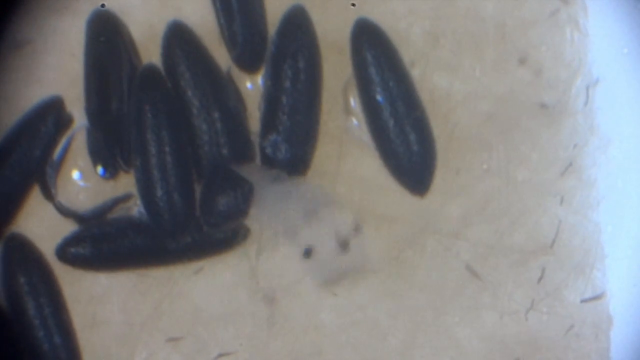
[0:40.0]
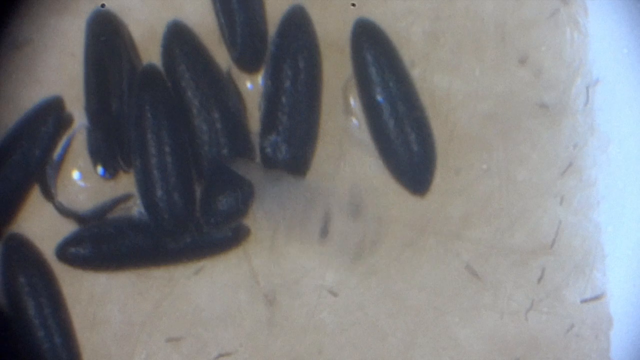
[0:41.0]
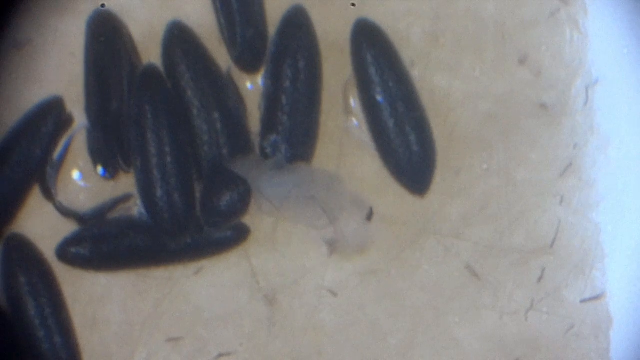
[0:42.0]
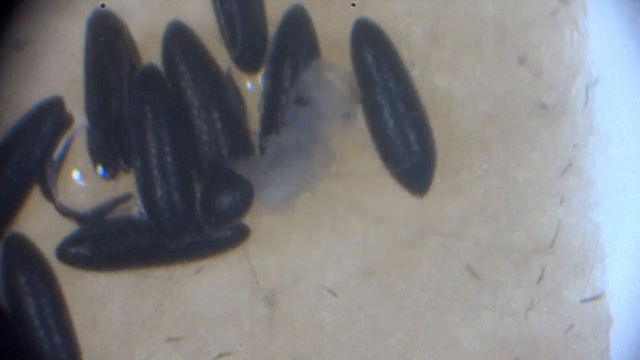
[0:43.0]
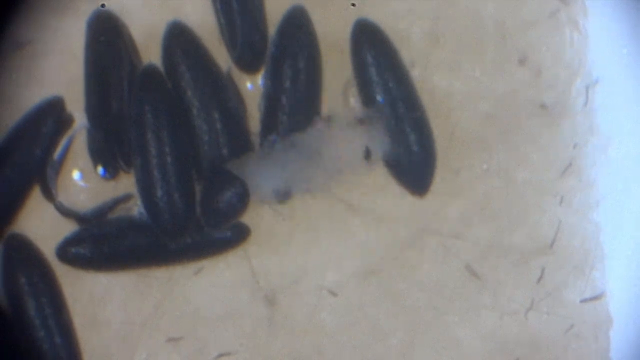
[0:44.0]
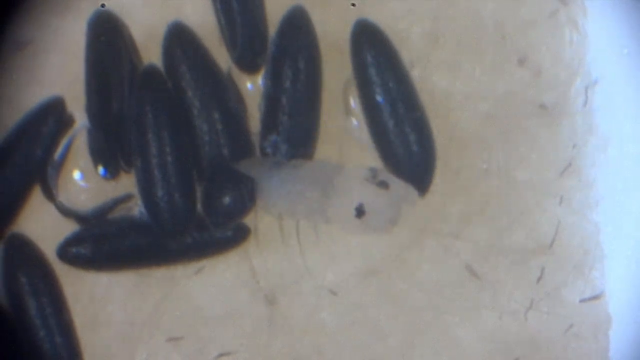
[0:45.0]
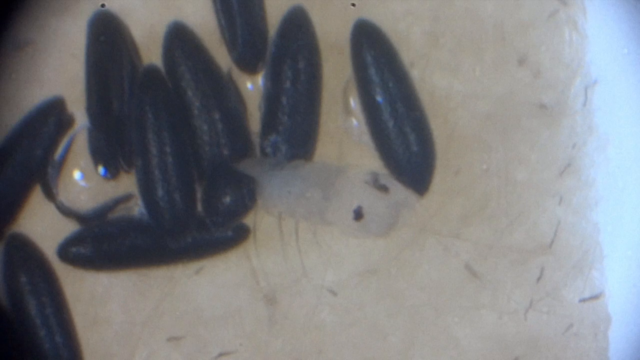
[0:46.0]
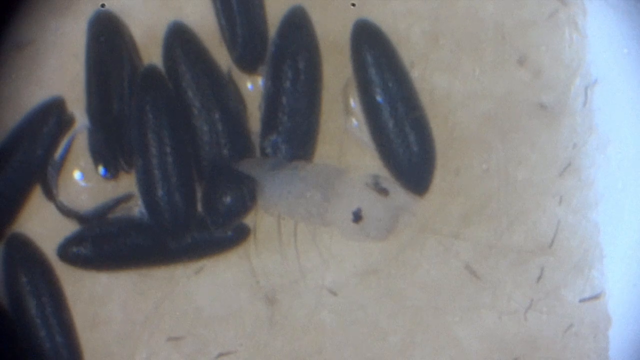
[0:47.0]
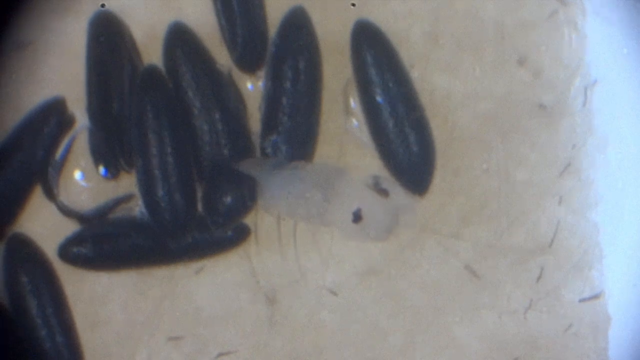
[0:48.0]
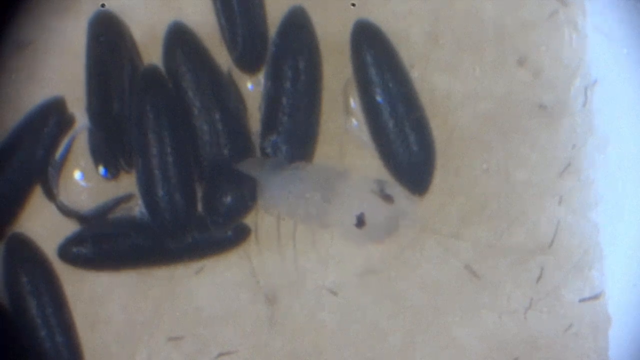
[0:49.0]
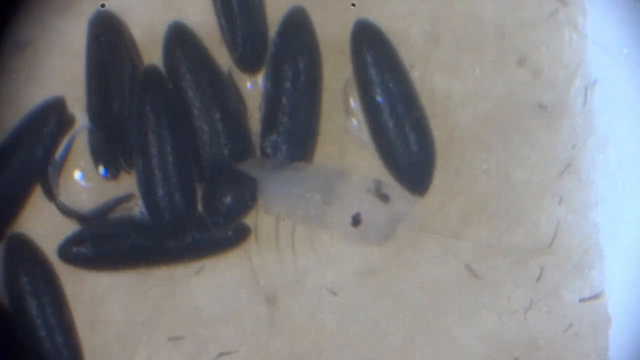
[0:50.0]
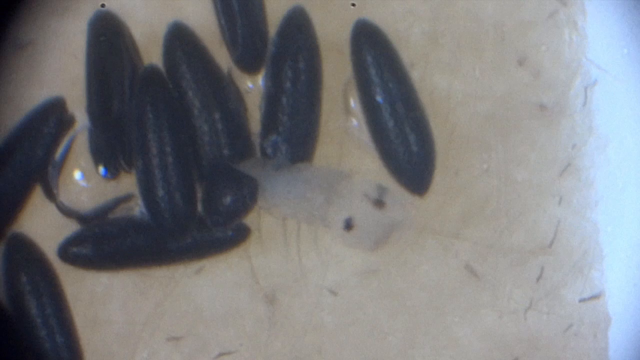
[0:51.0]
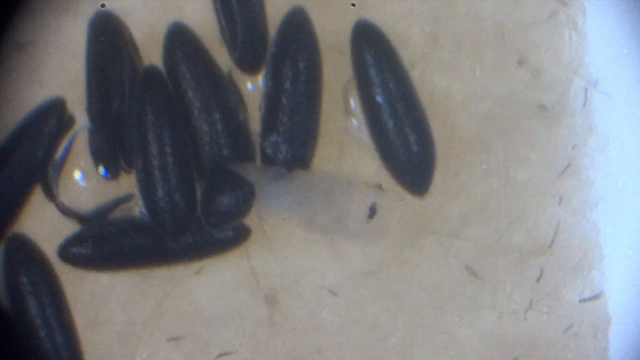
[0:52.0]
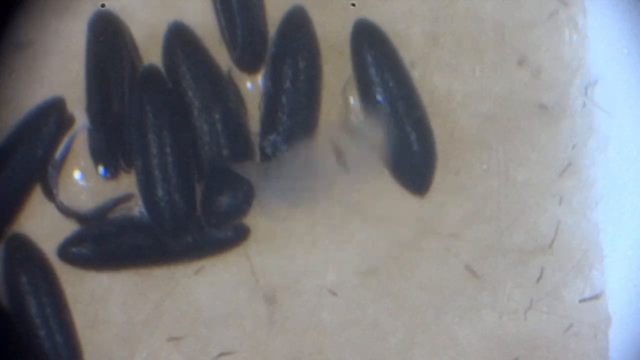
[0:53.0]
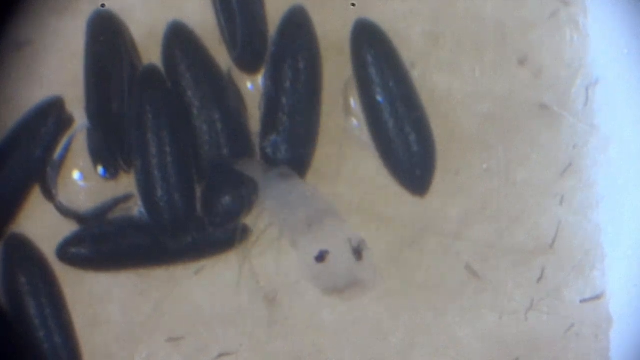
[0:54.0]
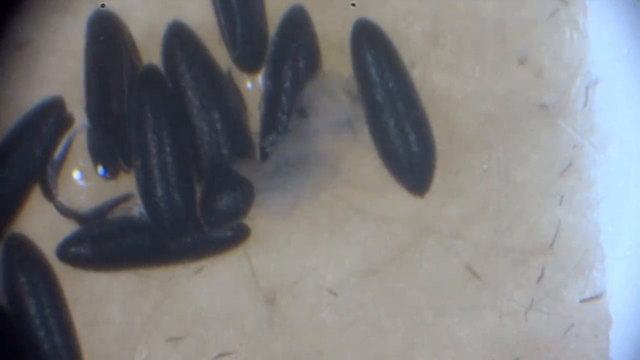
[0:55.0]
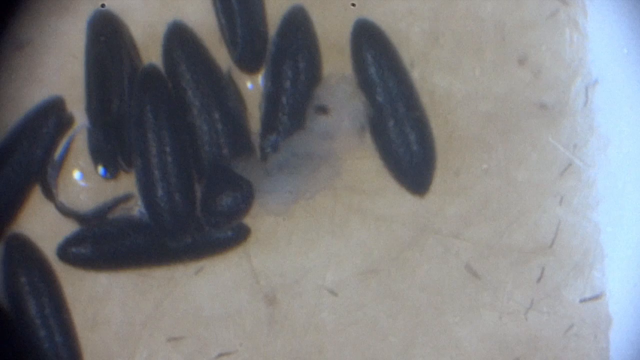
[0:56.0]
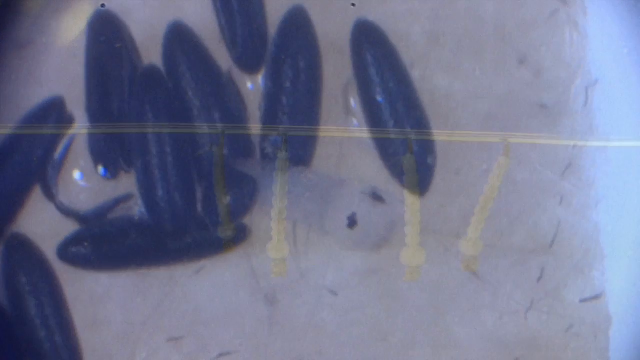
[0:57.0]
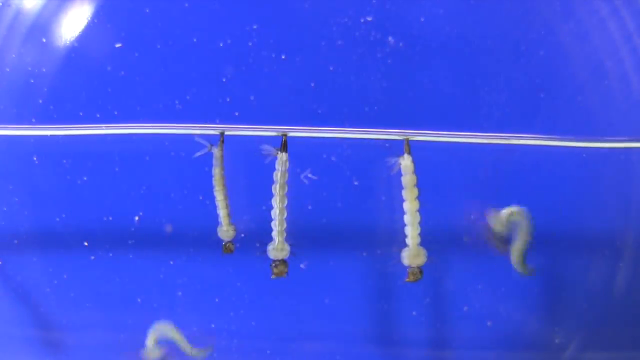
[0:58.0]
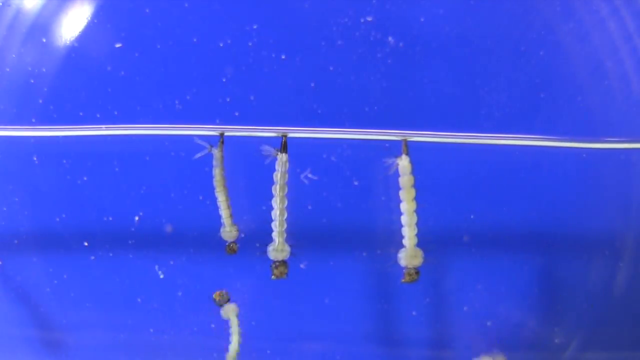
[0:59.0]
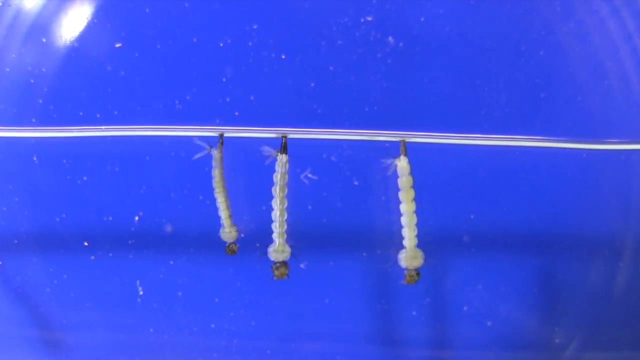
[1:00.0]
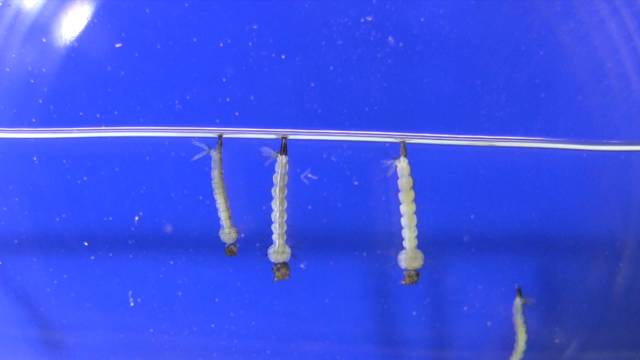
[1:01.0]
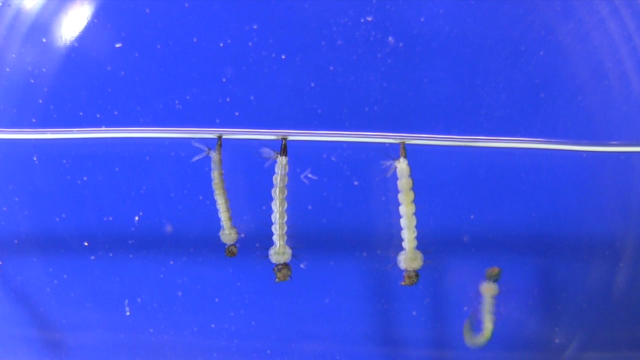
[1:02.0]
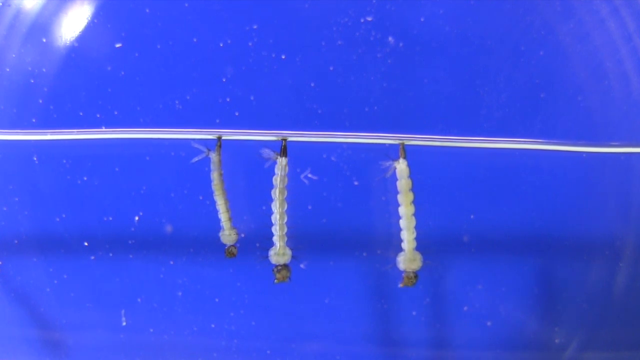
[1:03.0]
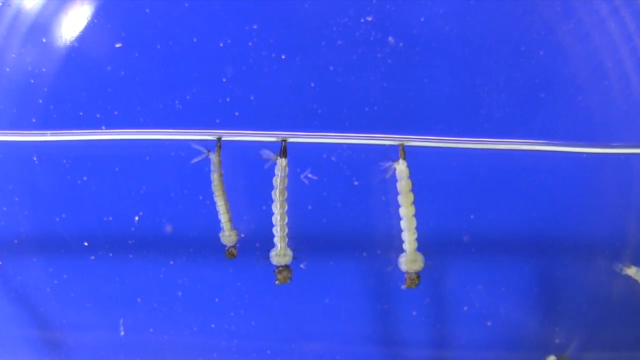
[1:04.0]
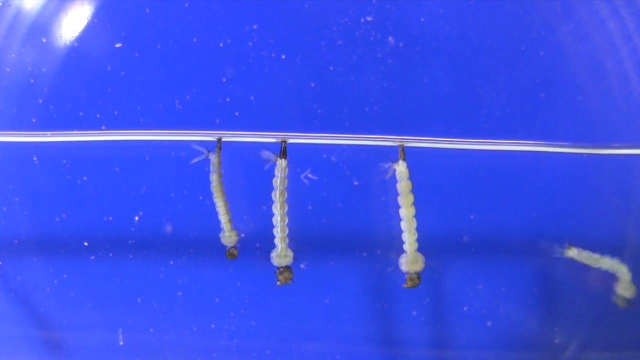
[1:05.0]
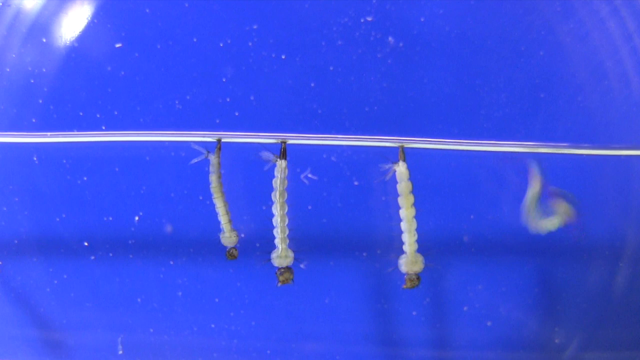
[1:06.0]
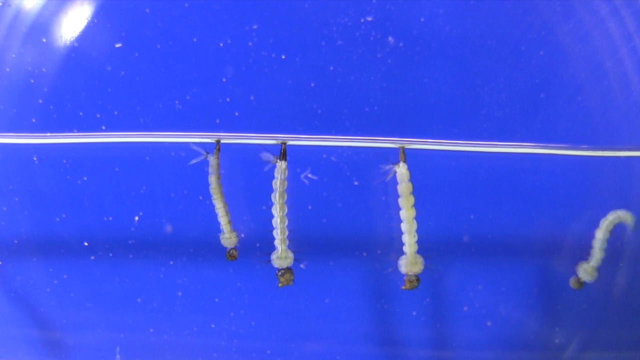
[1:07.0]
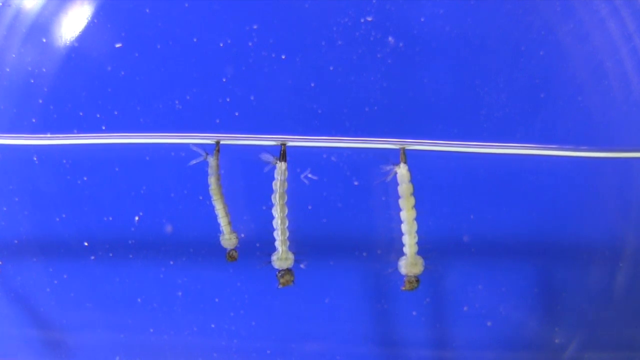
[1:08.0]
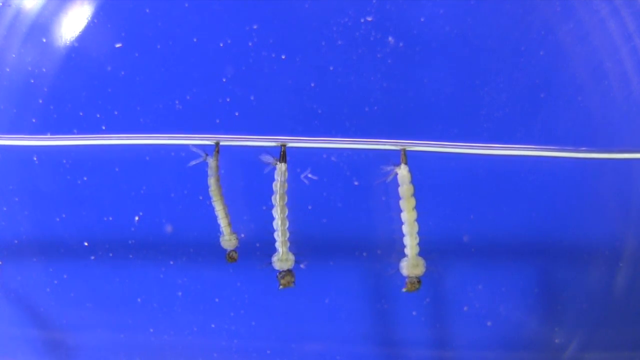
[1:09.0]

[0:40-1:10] The translucent worm is still trying to make its way out from among what seem to be black cocoons, moving from side to side as it tries to get out of one of them. The scene then changes to five worms sitting on what looks like a strip against a blue background, reaching out for the silver strip. Two of them fall off, and one tries to make its way back up and attaches itself to the silver strip. The other three sit there steadily and seem stuck, not moving much, except for the two on the sides, which move quite a bit. The one worm maneuvers back onto the silver strip.